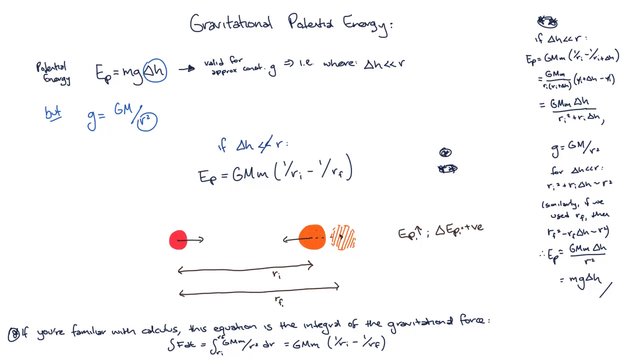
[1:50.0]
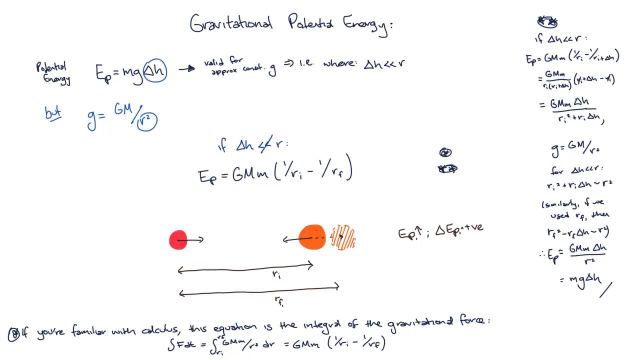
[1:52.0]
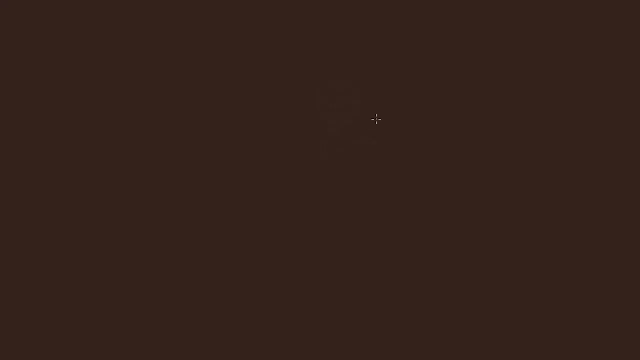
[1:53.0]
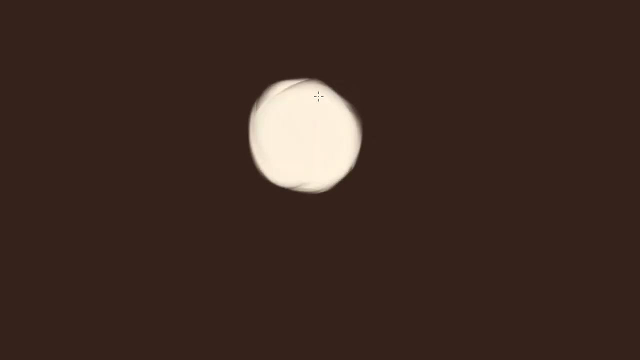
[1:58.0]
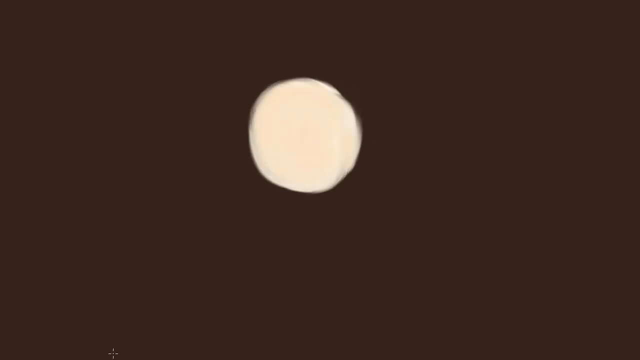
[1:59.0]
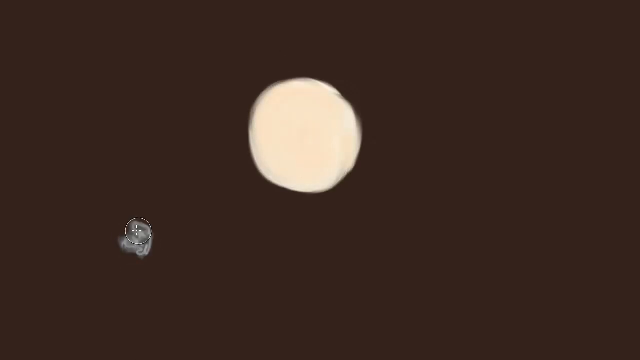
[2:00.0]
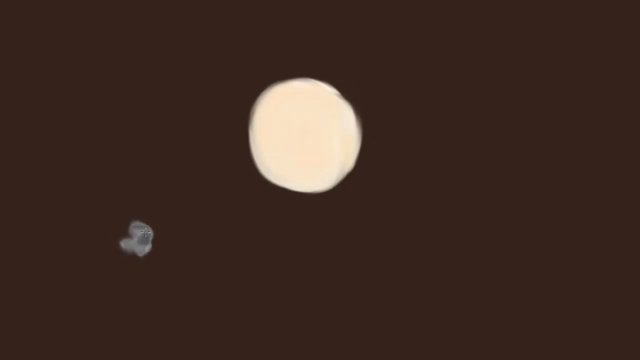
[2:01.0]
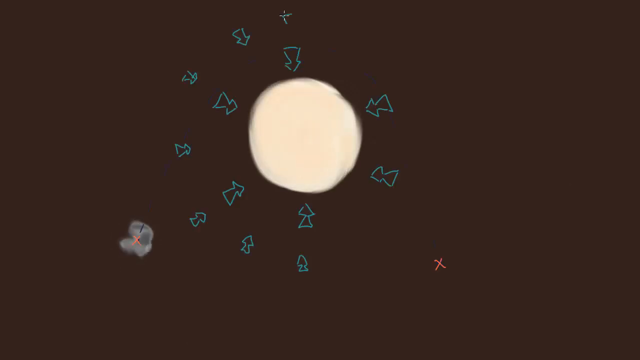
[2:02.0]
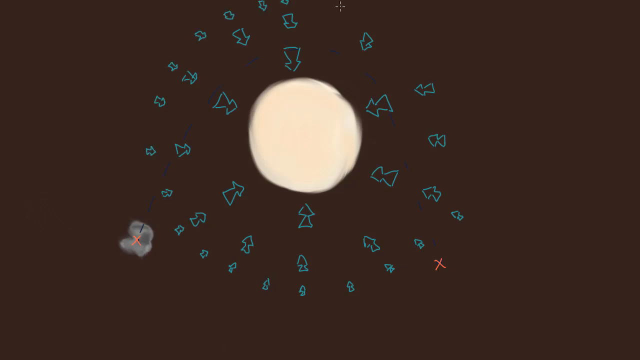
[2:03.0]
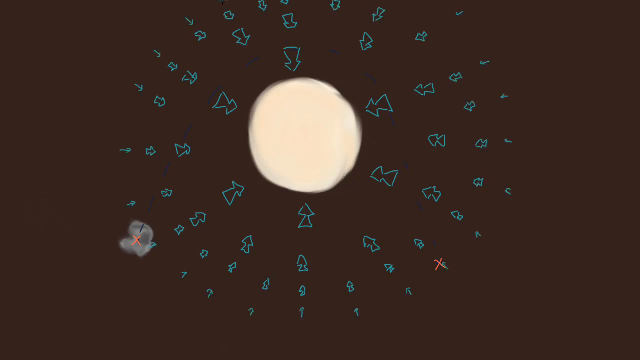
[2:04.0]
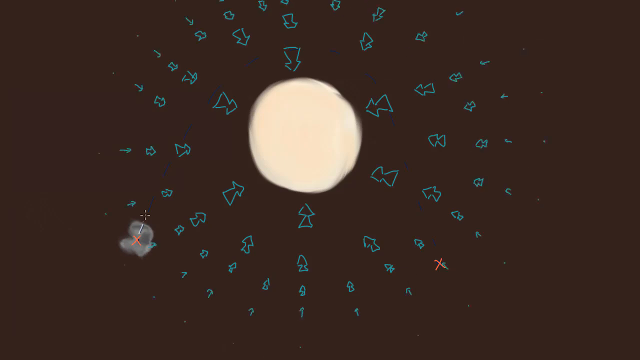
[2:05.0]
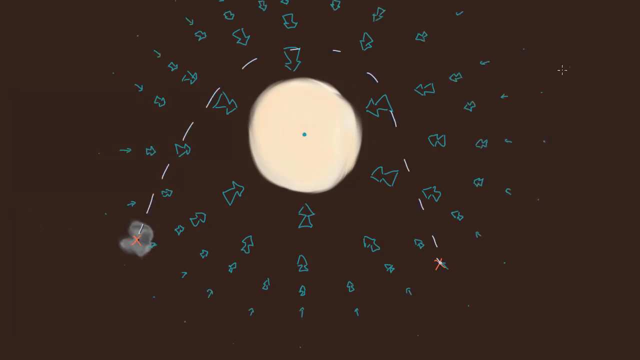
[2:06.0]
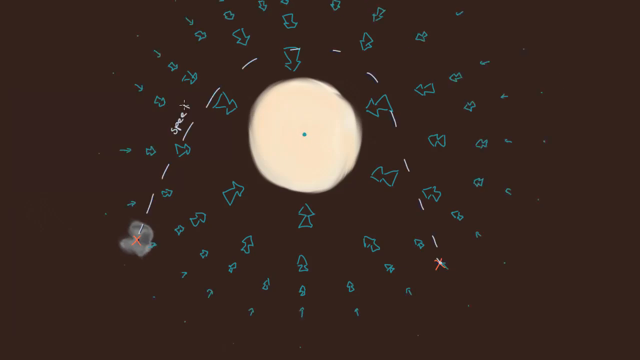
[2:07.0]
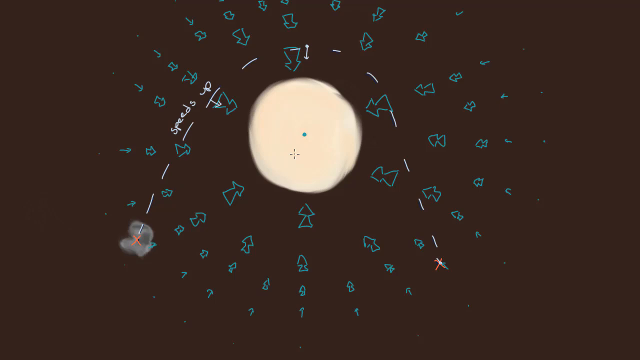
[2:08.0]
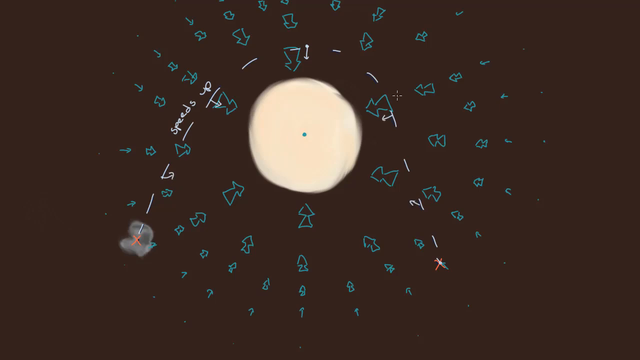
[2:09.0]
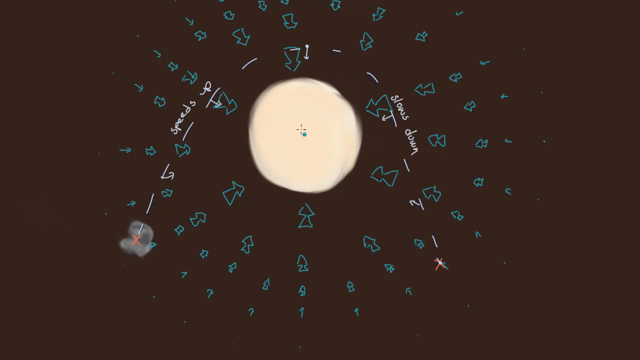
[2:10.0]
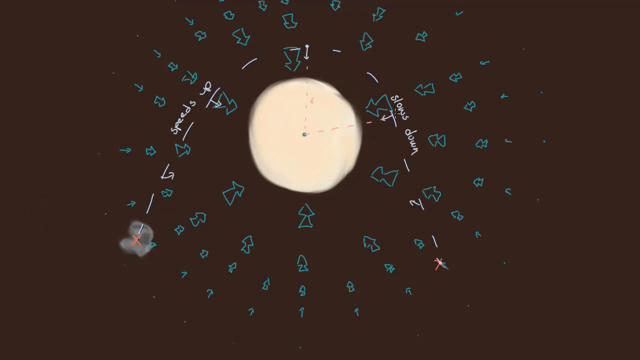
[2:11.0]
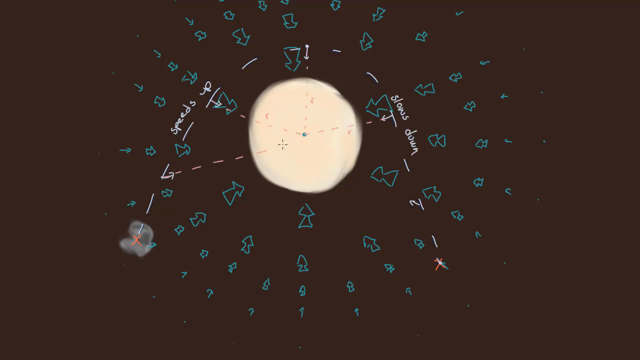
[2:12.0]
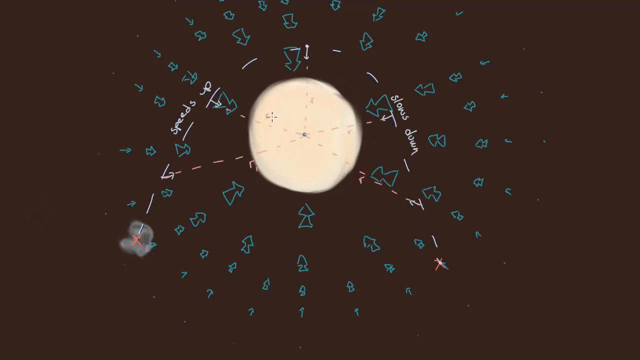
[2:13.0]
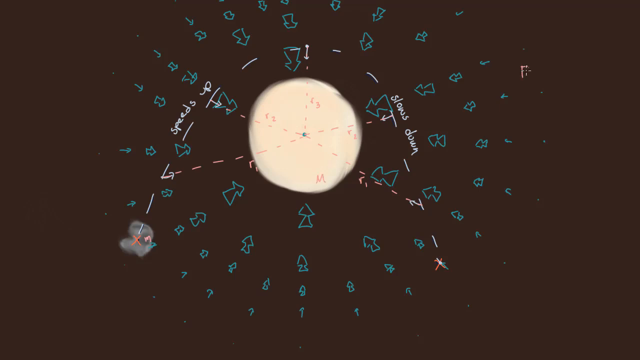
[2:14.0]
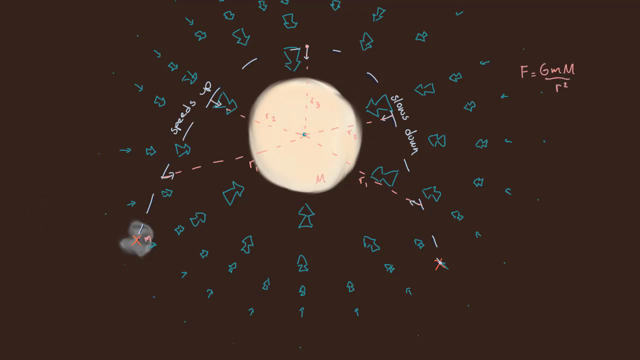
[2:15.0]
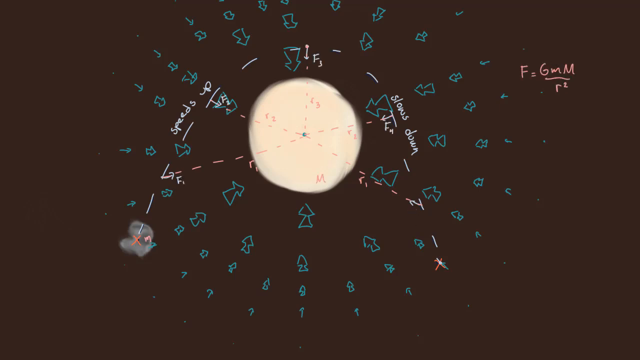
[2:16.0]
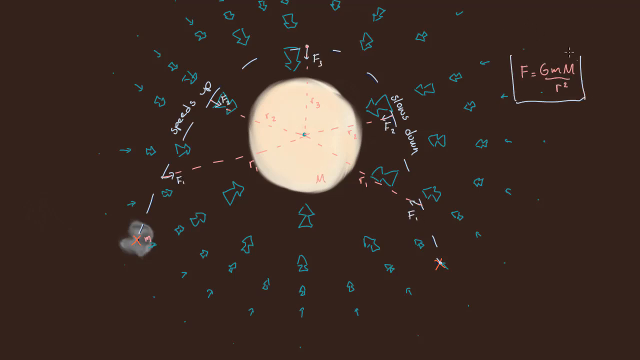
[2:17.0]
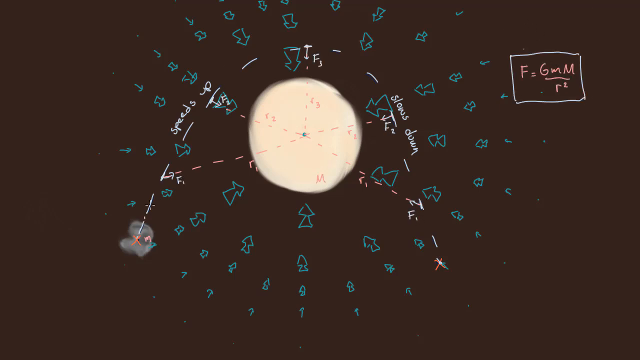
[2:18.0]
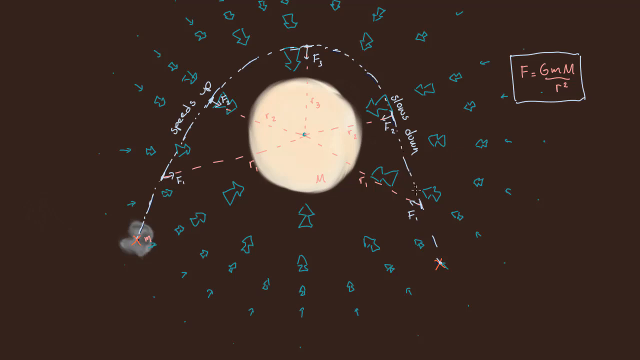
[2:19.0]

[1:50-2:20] The formula for gravitational potential energy, GPE = mgh, is shown on the graph, with m as the mass, g as the acceleration due to gravity at approximately 9.8 near Earth's surface, and h as the height of the object above the reference point. Key concepts are listed: position-dependent, height and mass, and the formula. An example involves lifting a box and dropping it as it falls.